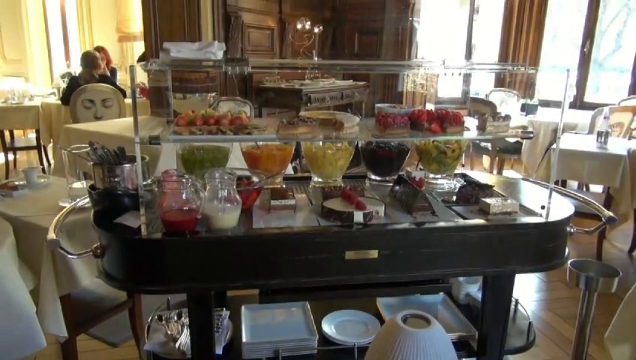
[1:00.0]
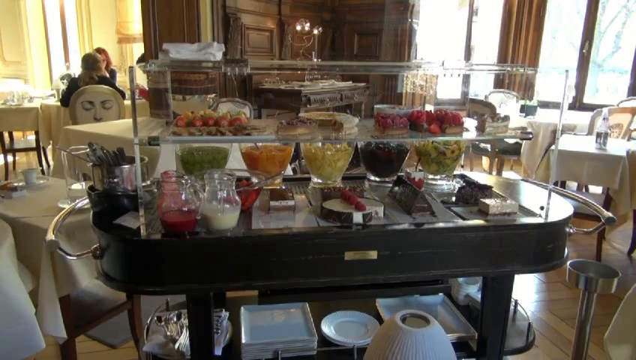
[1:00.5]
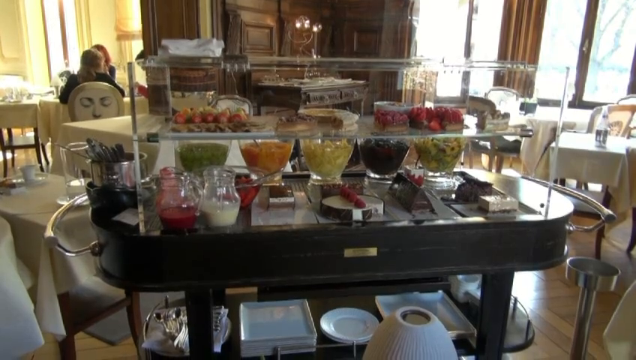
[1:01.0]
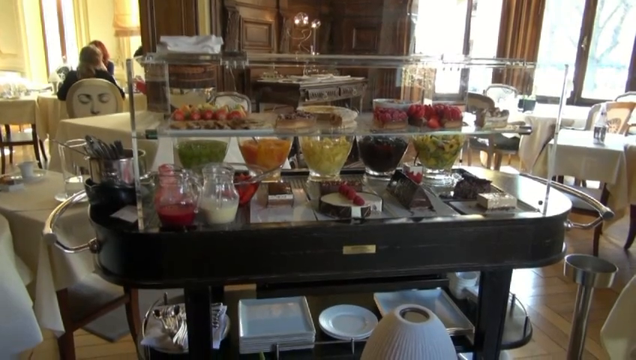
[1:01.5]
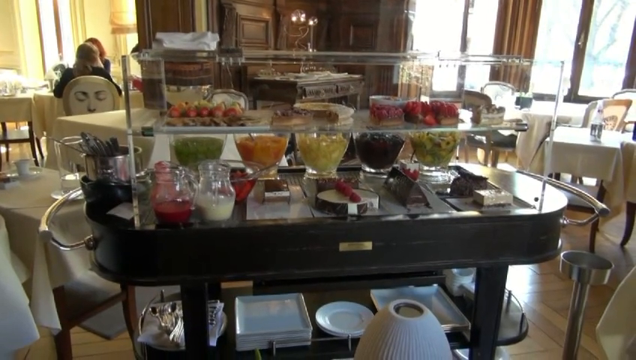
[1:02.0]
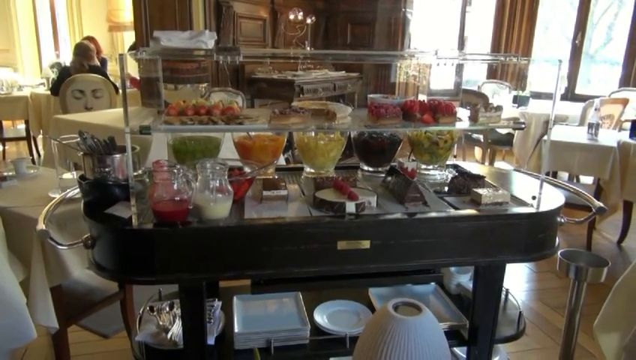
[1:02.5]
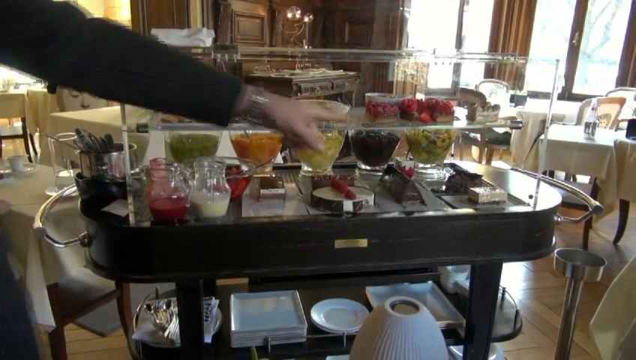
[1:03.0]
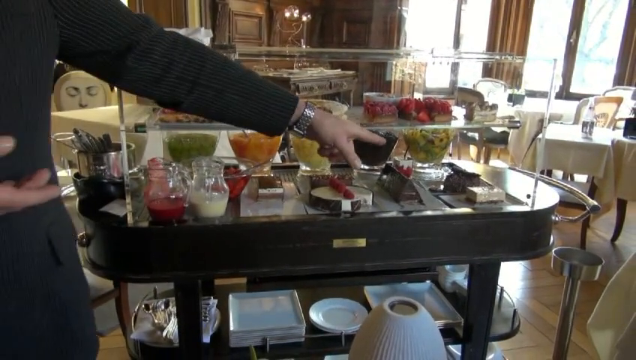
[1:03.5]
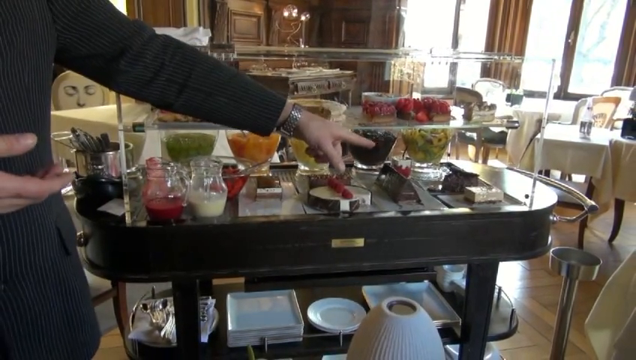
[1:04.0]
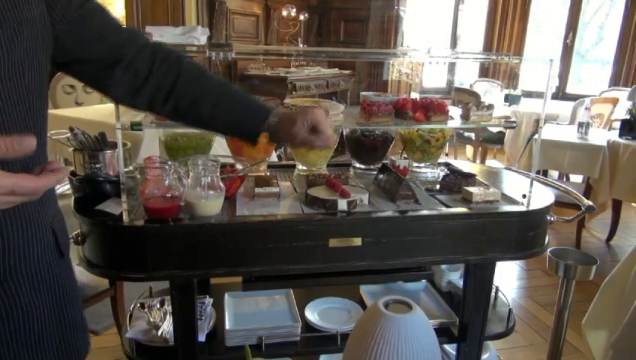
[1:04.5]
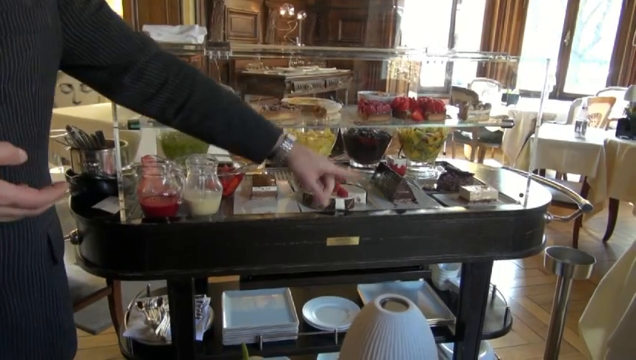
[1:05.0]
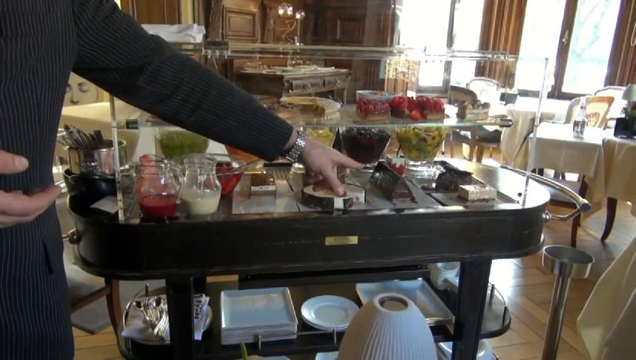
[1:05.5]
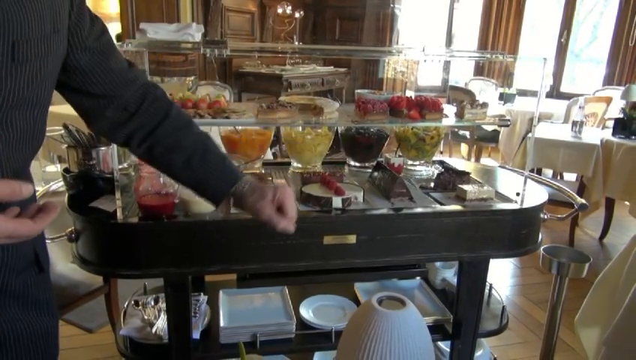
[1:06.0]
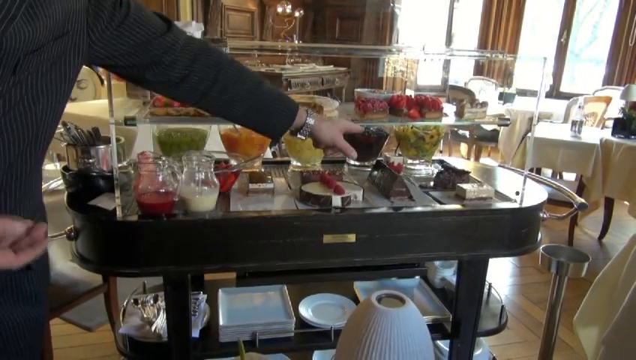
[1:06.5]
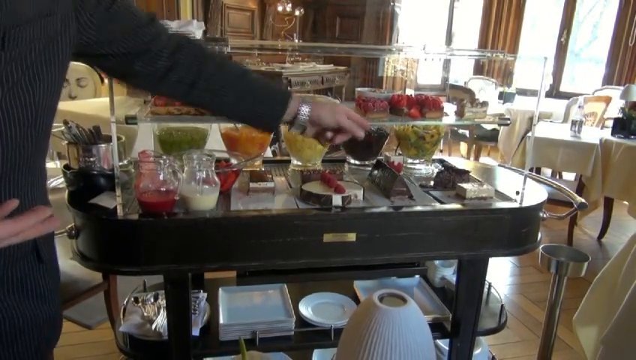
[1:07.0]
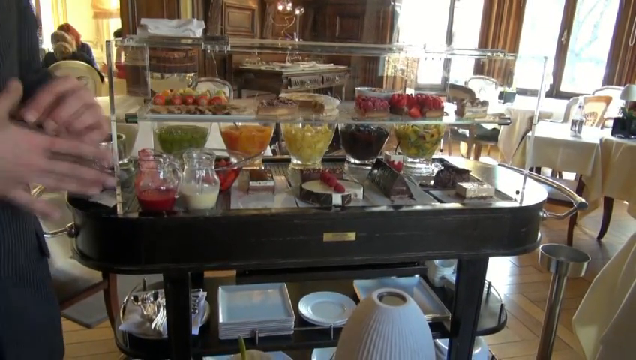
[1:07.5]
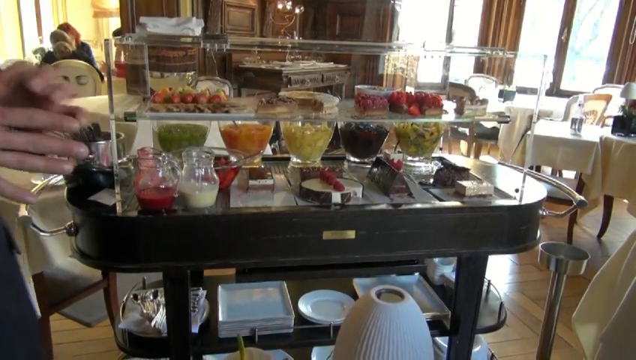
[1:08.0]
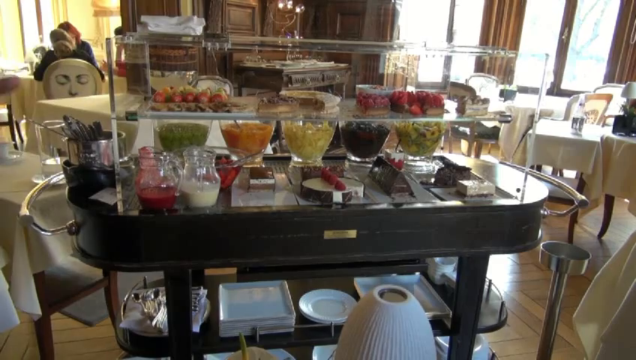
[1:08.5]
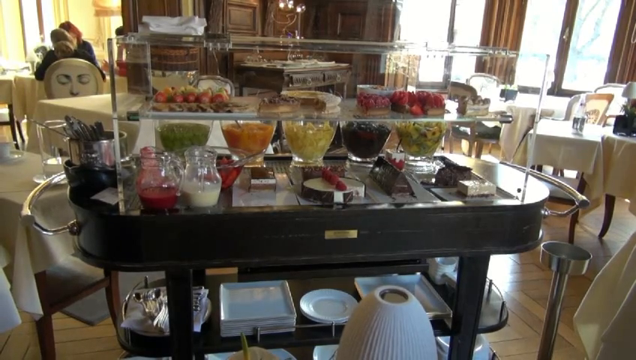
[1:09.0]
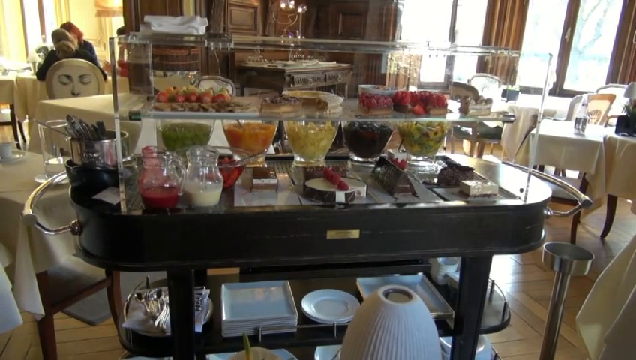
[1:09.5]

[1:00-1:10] The dessert bar is shown. At the bottom is what looks like a cheesecake with strawberries or raspberries on it. In a bowl in front of what looks like milk is something dark and deep, possibly a jelly or jam, maybe a raspberry jam or sauce, that can be poured out. Someone, apparently a man in a suit judging by the sleeves, points to different items on the dessert section. He wears a watch on his left wrist.